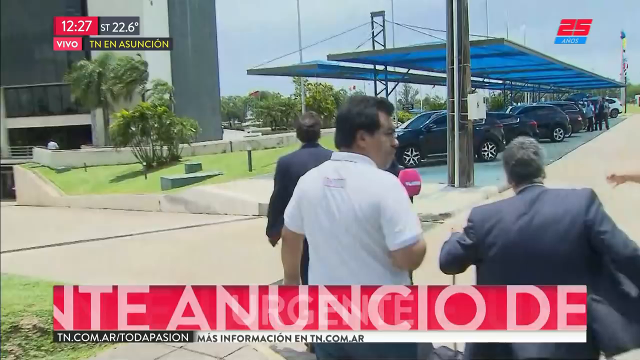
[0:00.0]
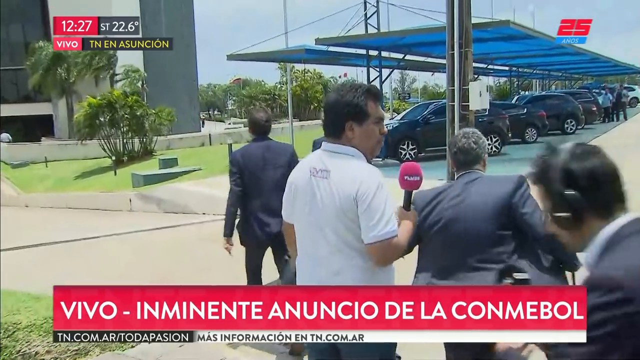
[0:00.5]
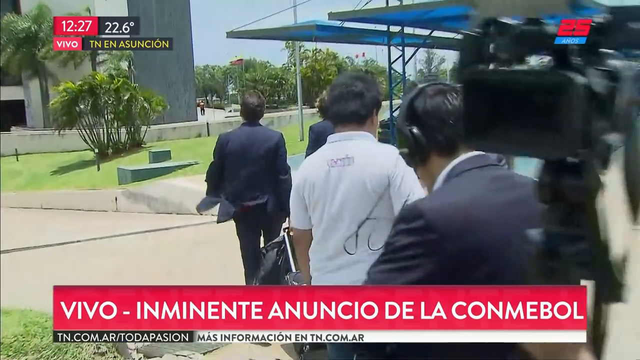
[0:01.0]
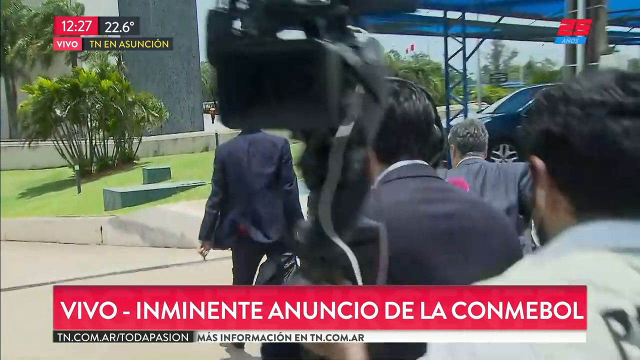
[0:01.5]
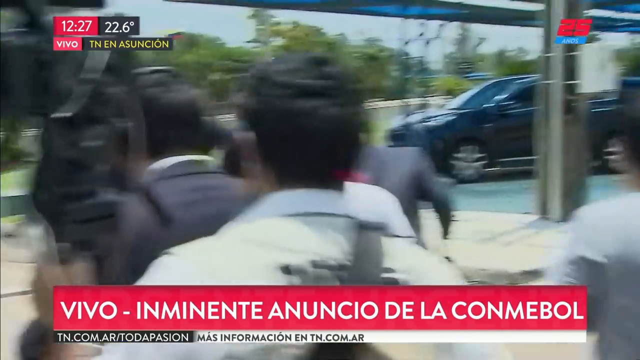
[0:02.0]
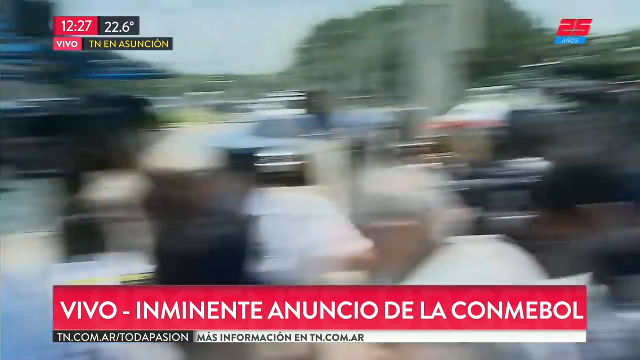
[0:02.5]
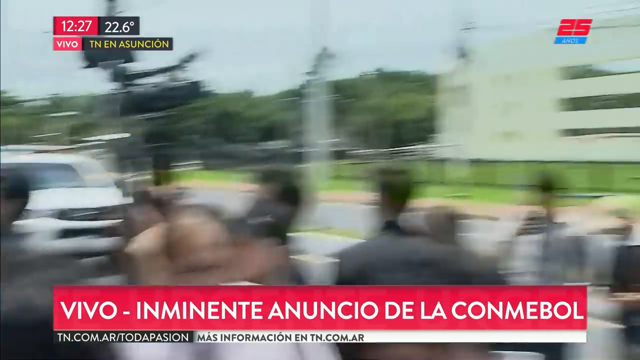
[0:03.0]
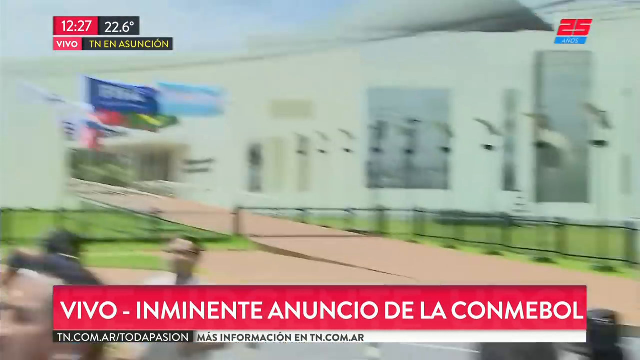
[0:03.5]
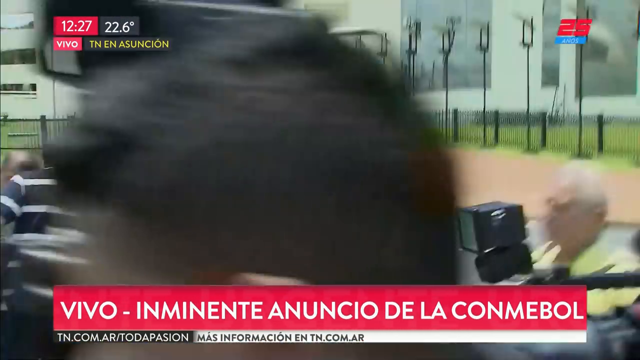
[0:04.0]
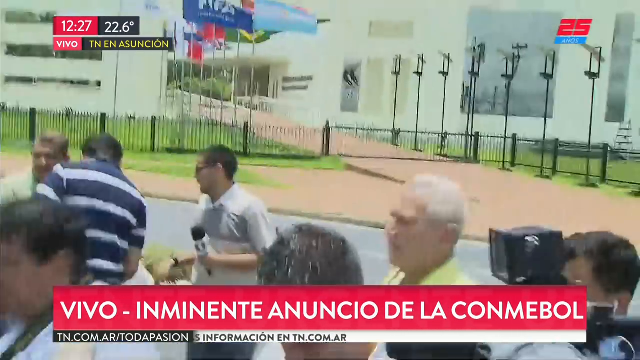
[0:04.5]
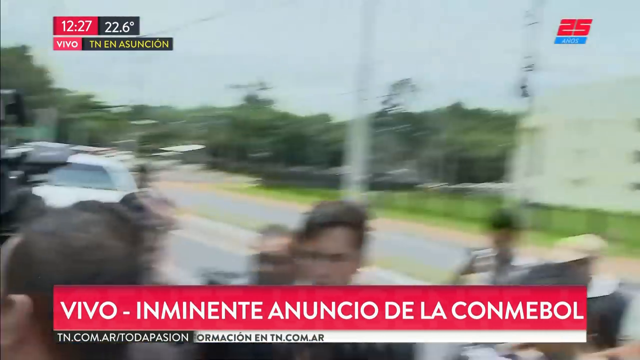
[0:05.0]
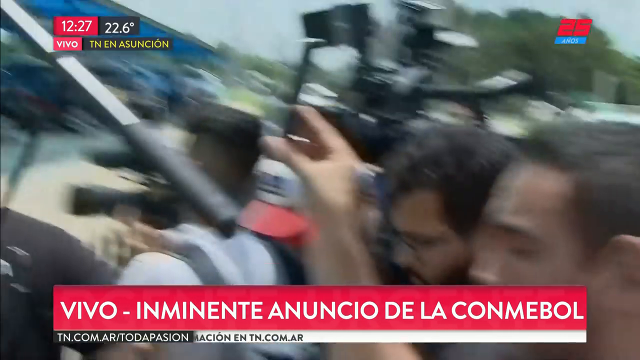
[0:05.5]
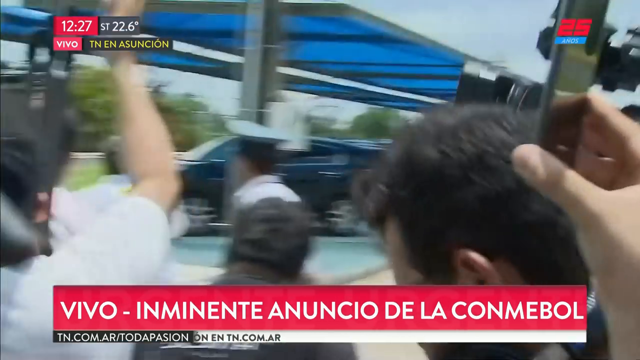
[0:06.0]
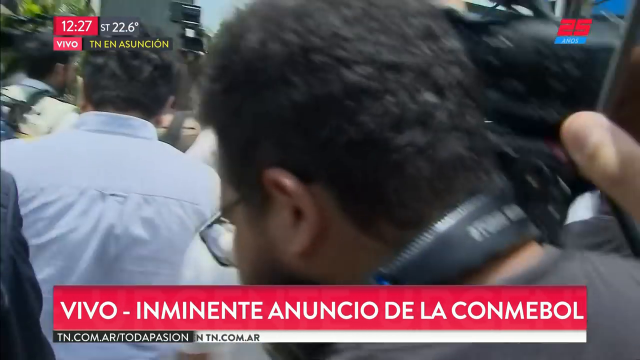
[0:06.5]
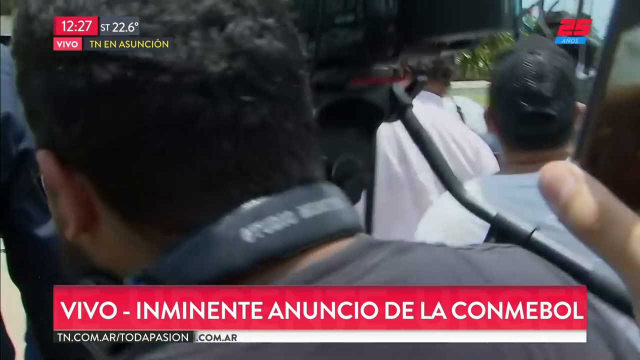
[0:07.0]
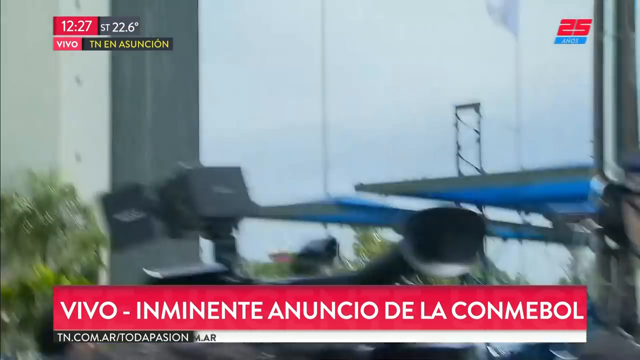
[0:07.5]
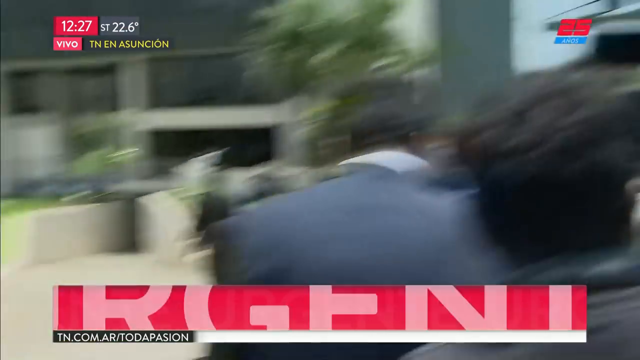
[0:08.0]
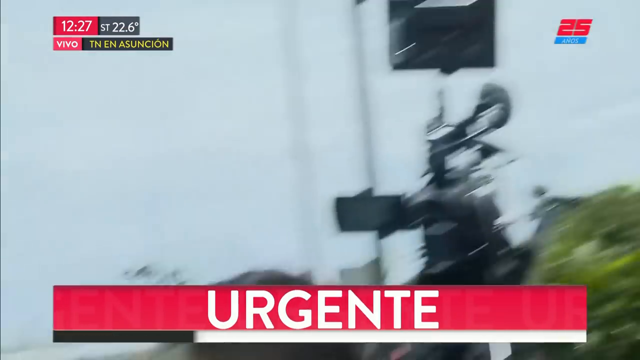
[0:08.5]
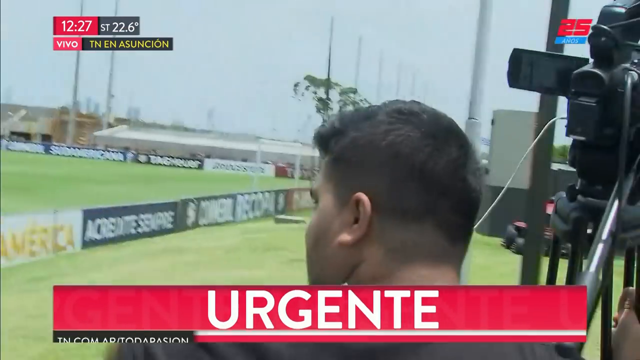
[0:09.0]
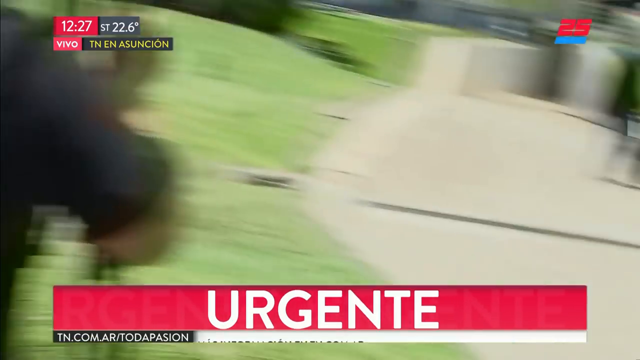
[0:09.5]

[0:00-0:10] What appears to be a news program opens with text at the bottom of the screen and a time at the top reading "12:27". Several people are walking; some wear business suits, and one man in a white shirt holds a microphone with a red top. A person is pushing or holding a camera, and then the view pans to the right, revealing many other people all walking together in the same direction. More cameras appear on screen as the camera moves somewhat left and right, trying to capture everyone, while the group appears to walk pretty much together toward a building.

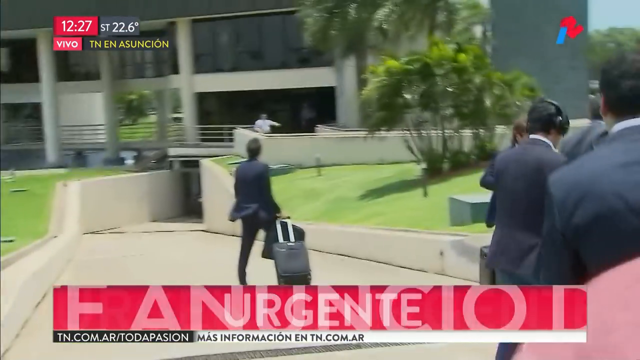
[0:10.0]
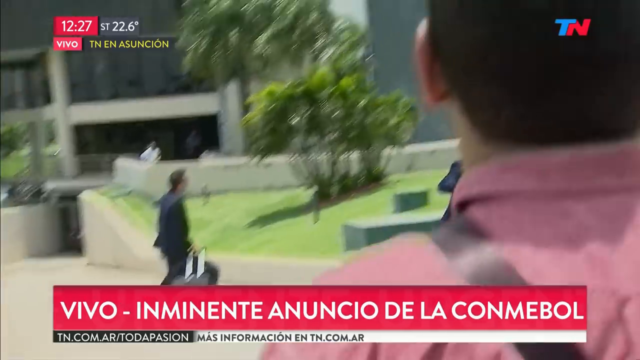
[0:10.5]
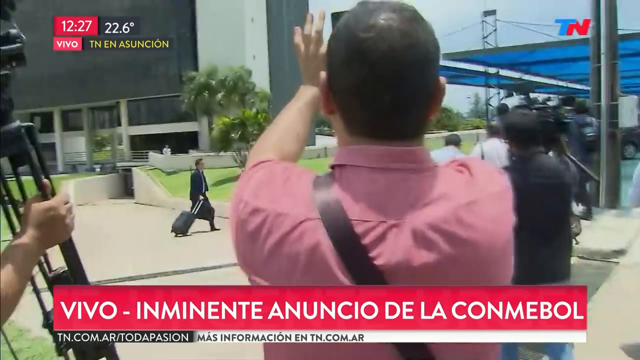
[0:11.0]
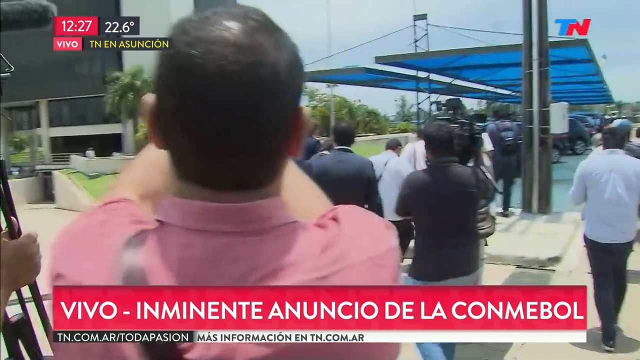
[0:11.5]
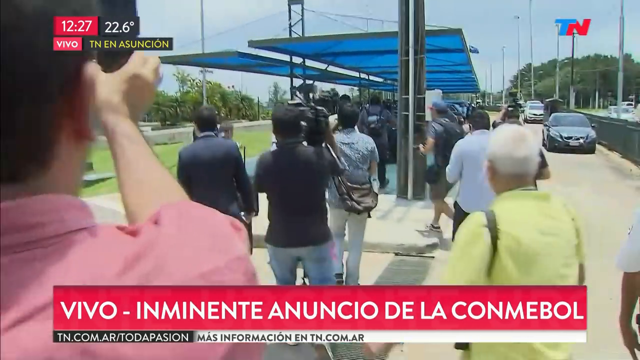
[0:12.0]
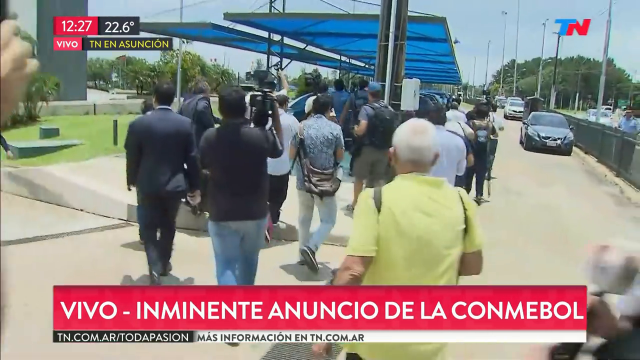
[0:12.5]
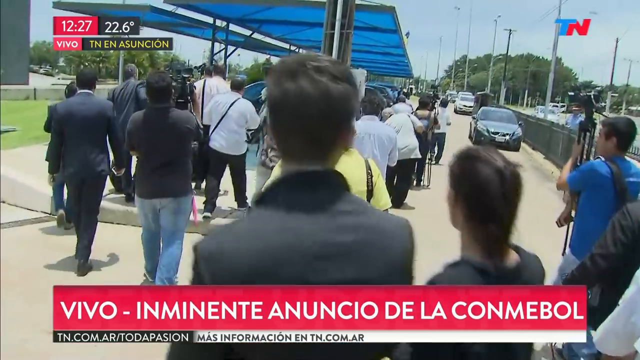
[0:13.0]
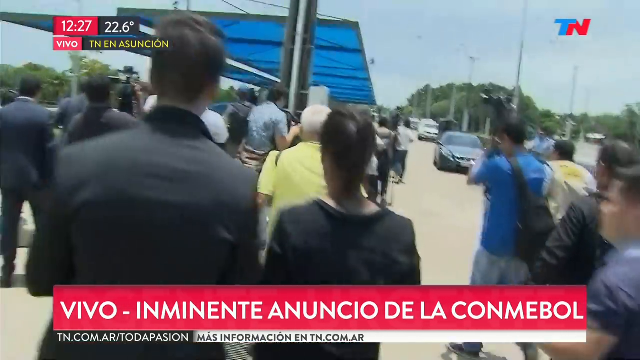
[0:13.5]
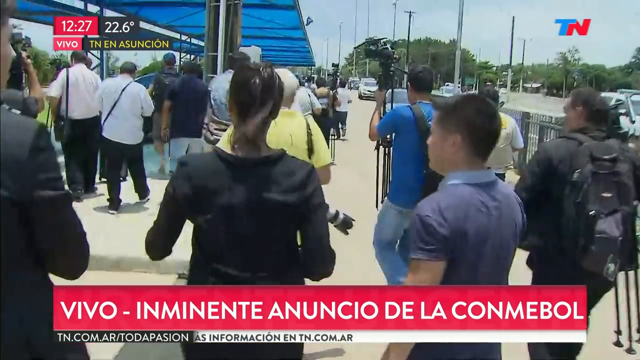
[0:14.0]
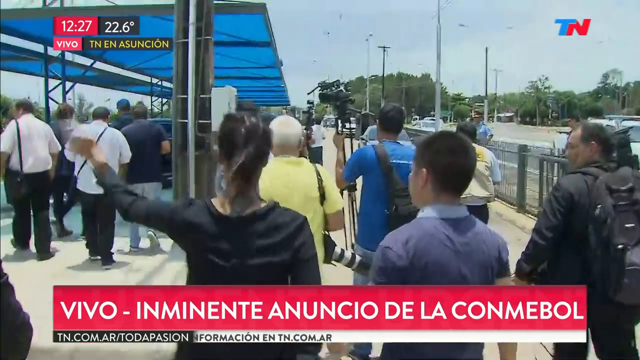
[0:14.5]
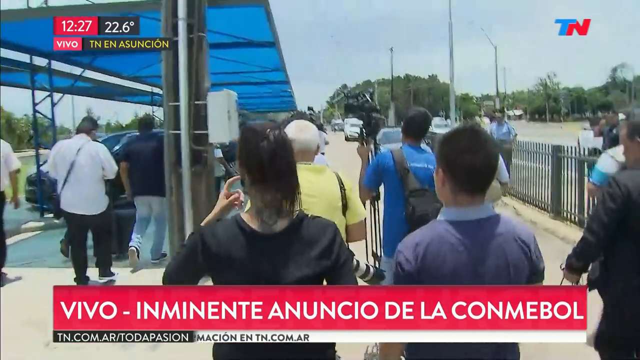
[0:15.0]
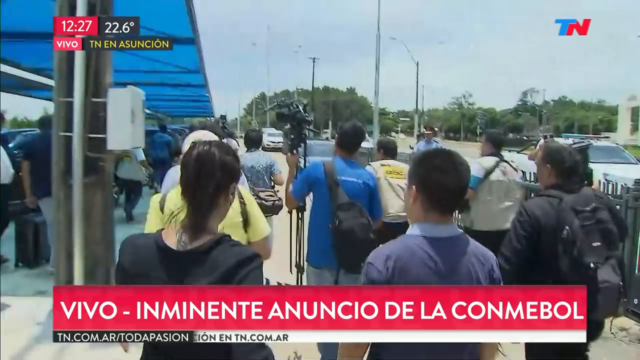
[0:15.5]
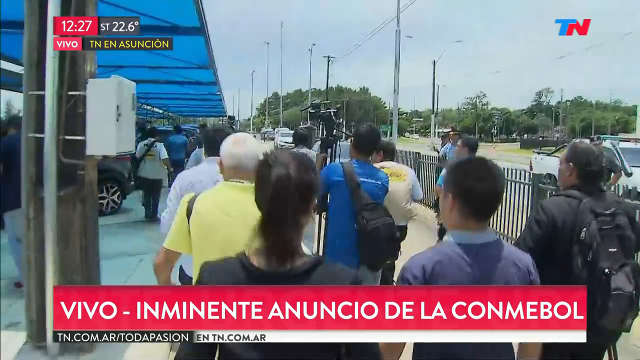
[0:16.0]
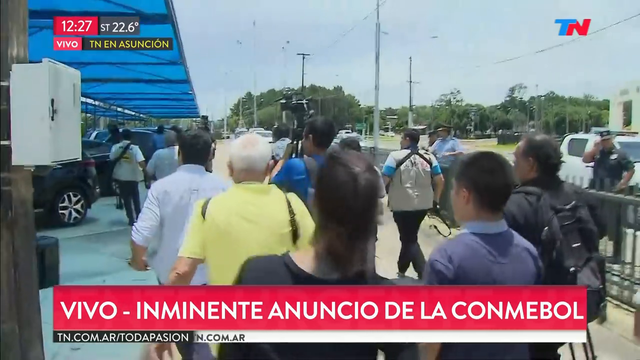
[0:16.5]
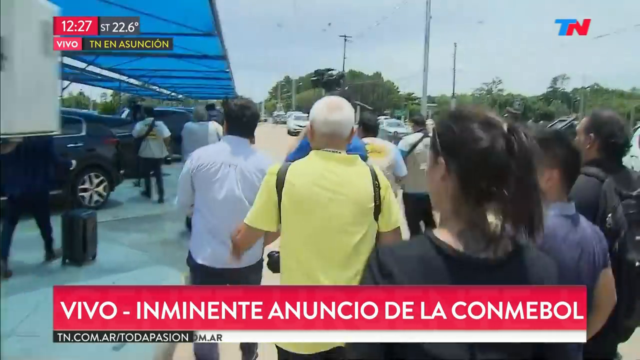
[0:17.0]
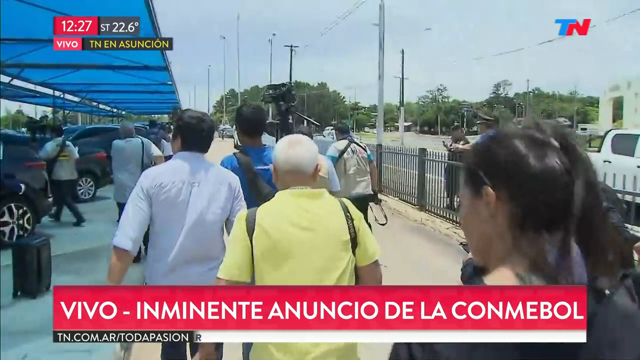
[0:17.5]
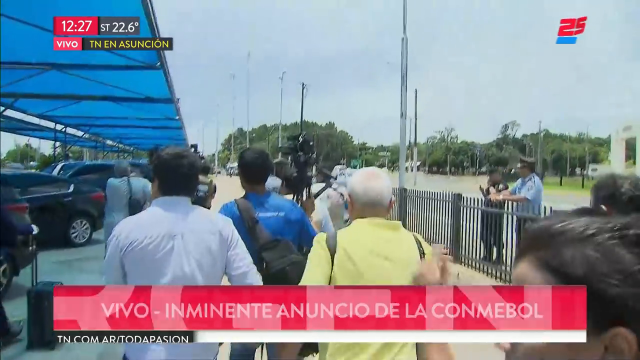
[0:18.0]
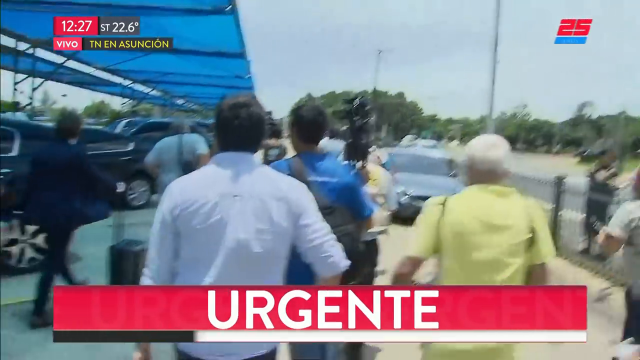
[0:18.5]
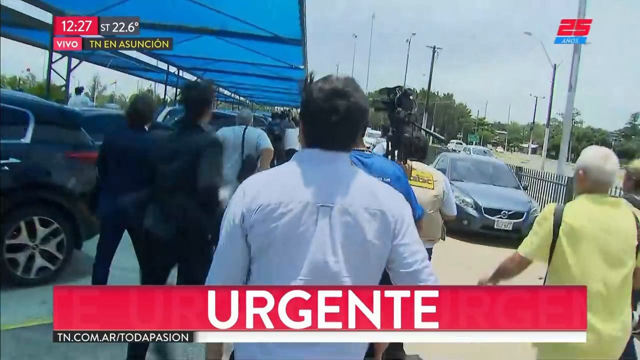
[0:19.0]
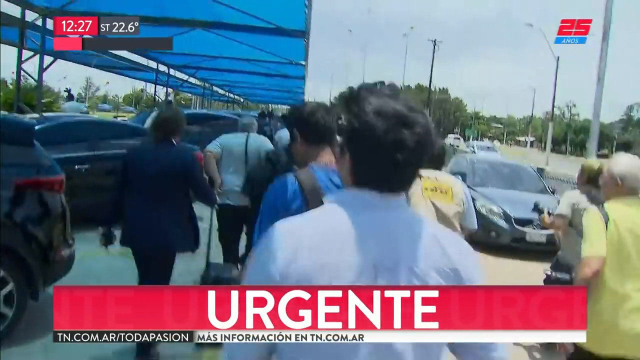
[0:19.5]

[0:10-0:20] News footage follows a crowd. The back of a dark-haired man in a somewhat pink-colored shirt is visible, and he is surrounded by many people all walking in the same direction, wearing all different kinds of clothes; many are holding cameras. They walk toward or down the street past a covered parking area with a blue cover, and everyone seems to be approaching cars lined up in a row, all parked to their left.